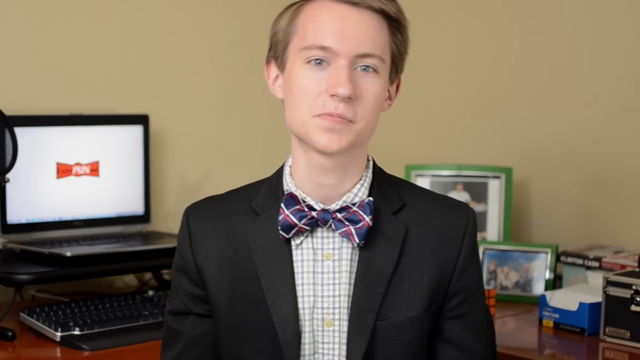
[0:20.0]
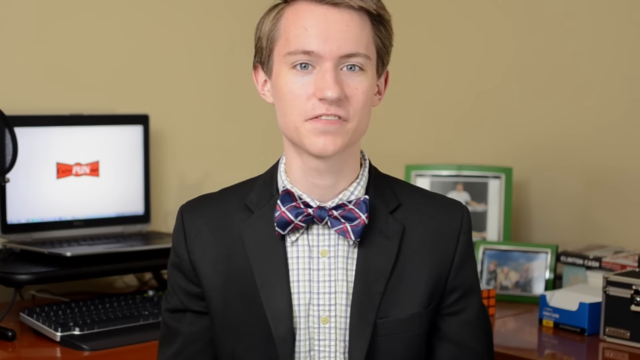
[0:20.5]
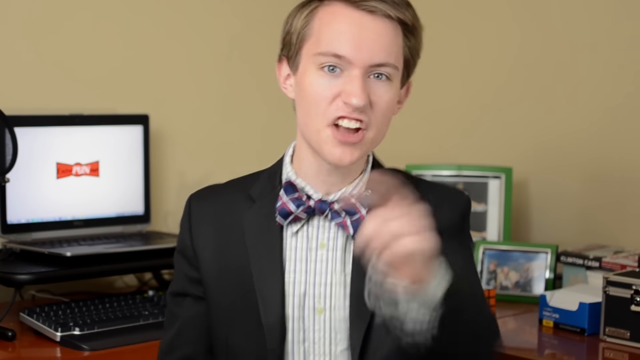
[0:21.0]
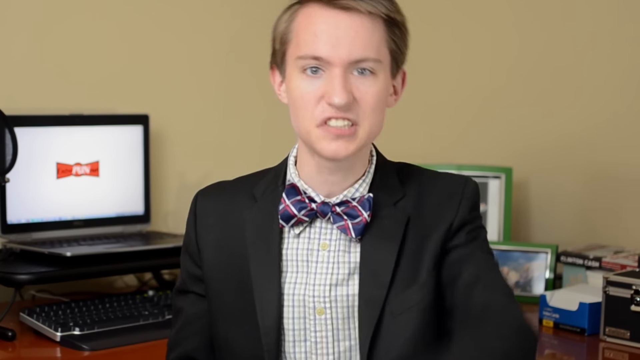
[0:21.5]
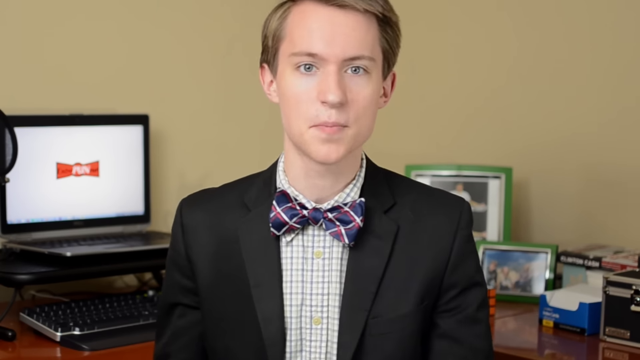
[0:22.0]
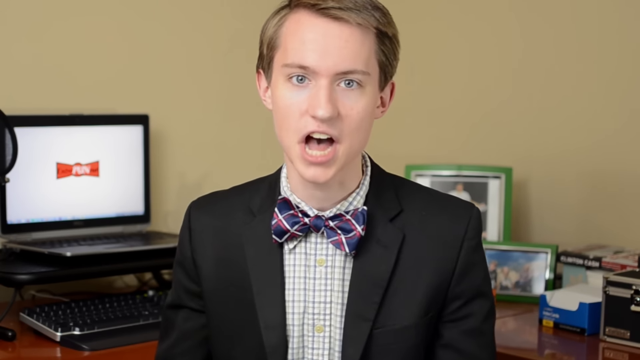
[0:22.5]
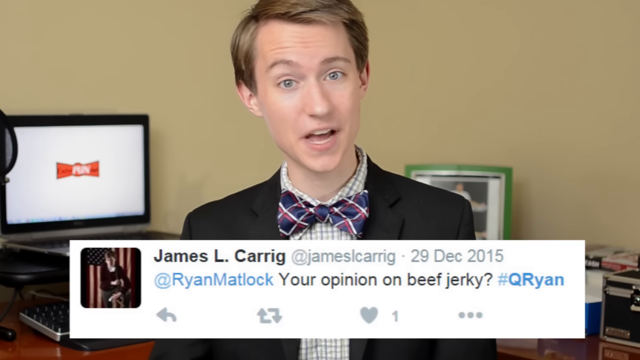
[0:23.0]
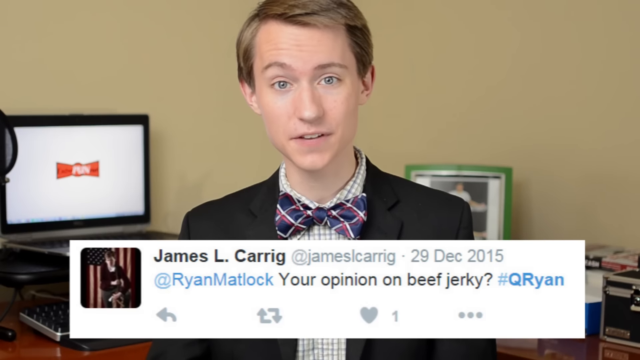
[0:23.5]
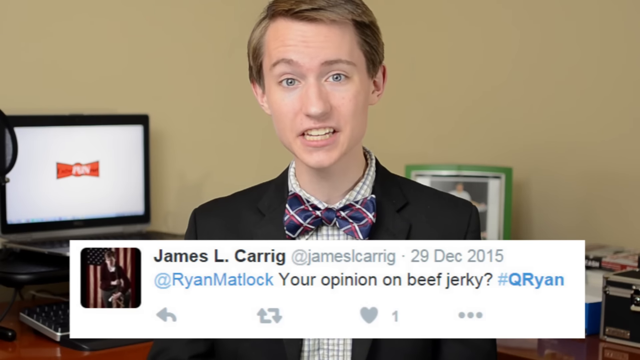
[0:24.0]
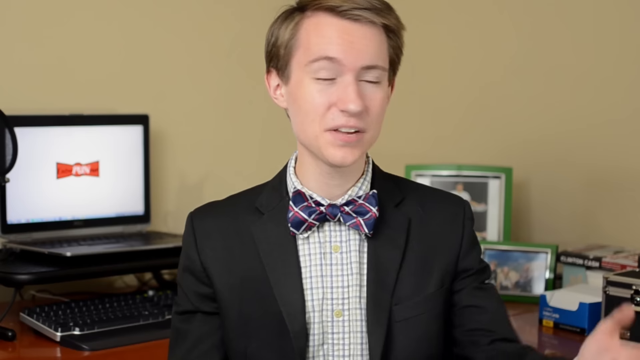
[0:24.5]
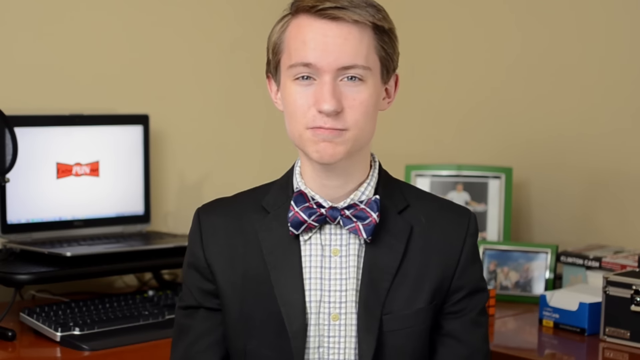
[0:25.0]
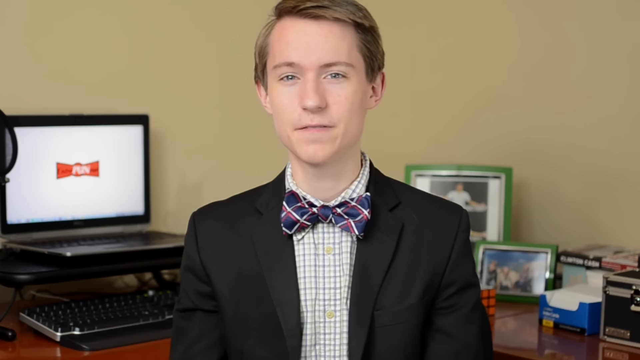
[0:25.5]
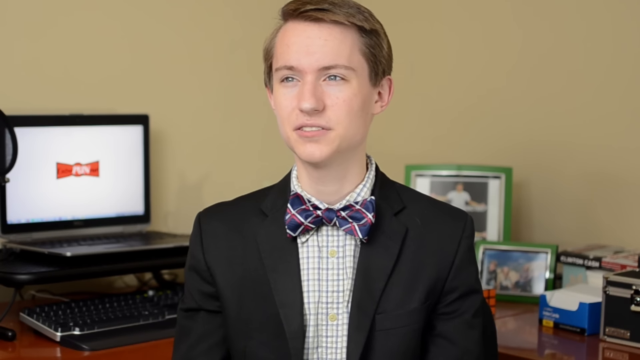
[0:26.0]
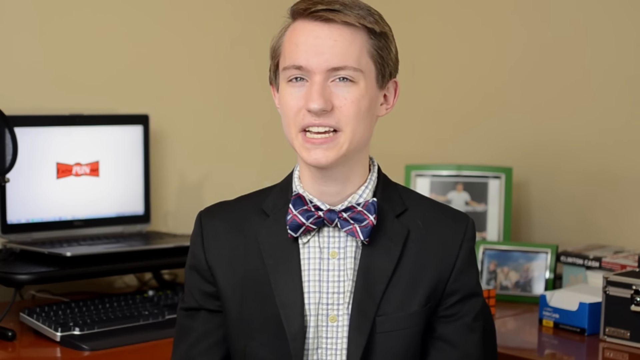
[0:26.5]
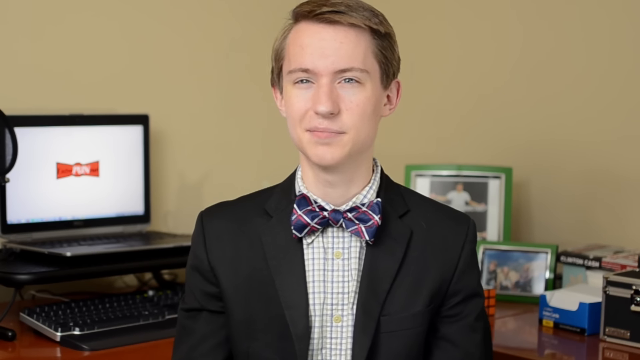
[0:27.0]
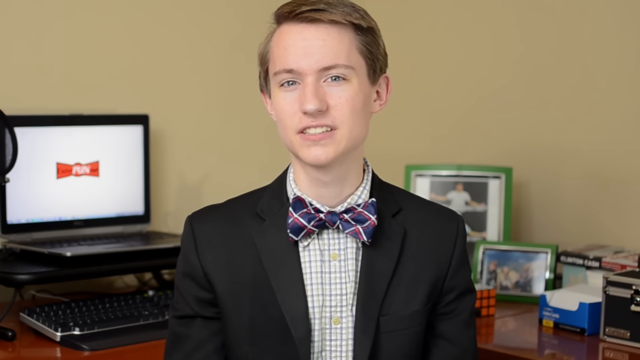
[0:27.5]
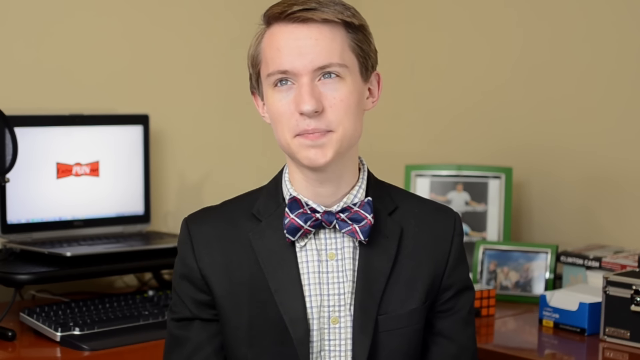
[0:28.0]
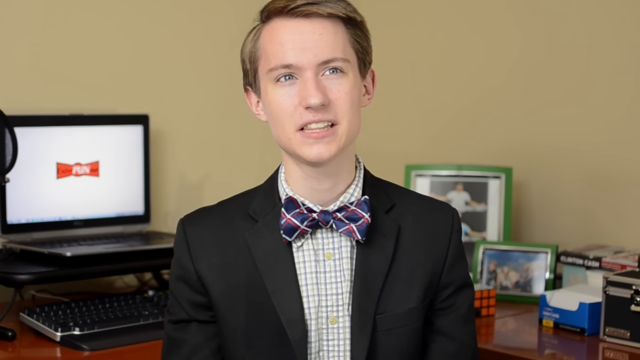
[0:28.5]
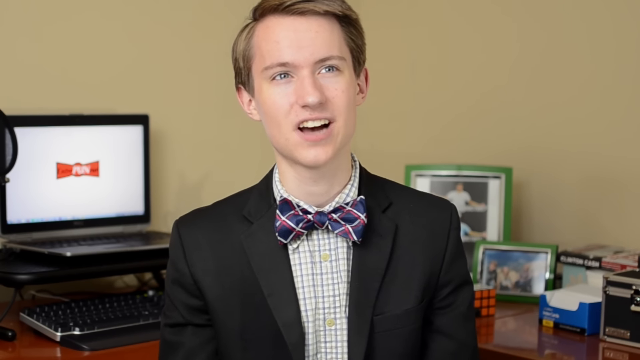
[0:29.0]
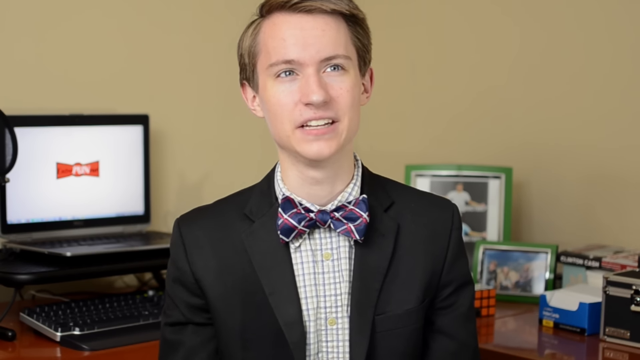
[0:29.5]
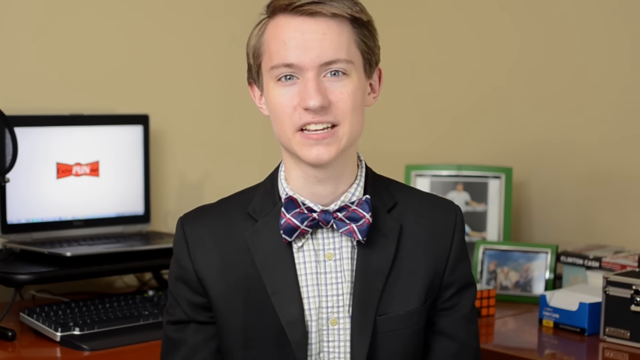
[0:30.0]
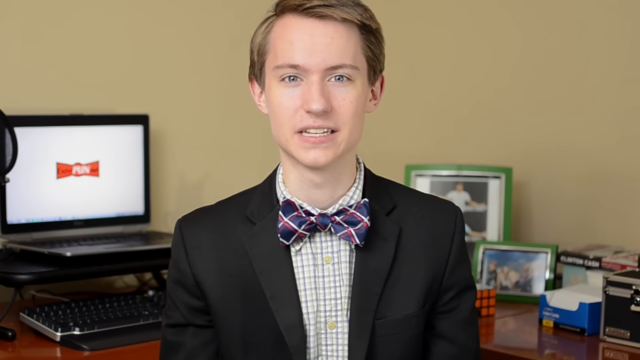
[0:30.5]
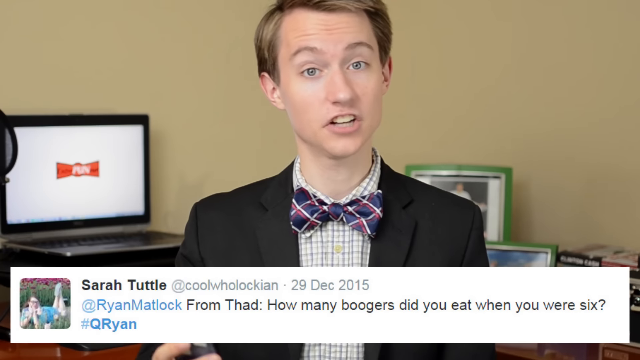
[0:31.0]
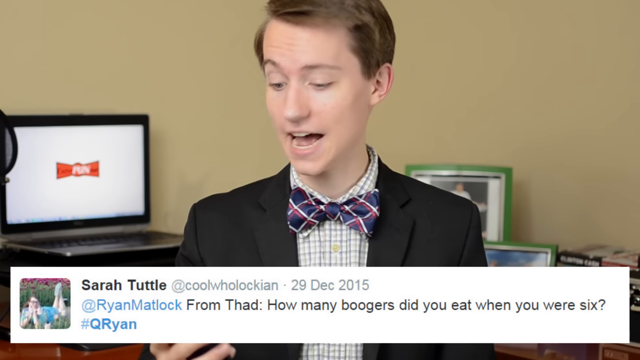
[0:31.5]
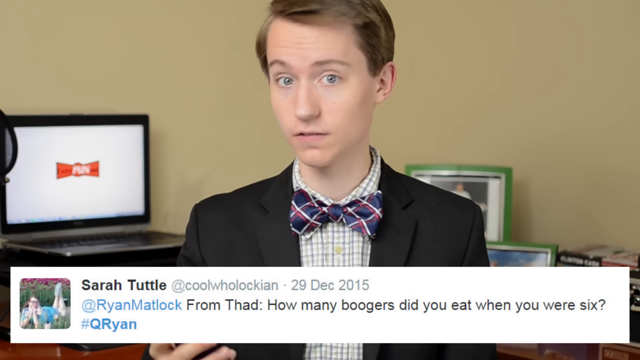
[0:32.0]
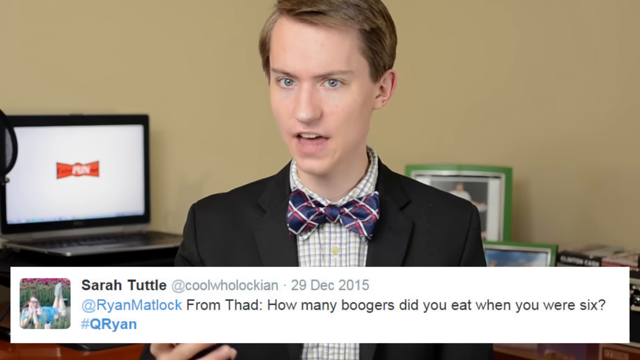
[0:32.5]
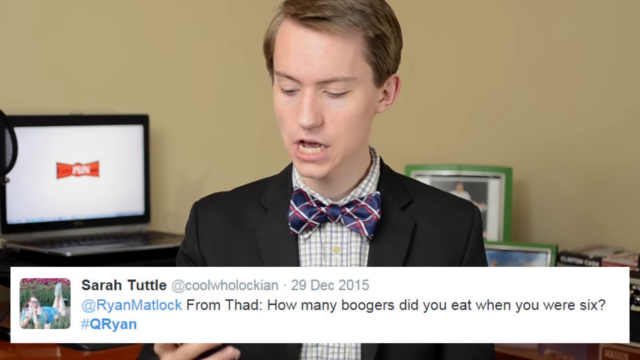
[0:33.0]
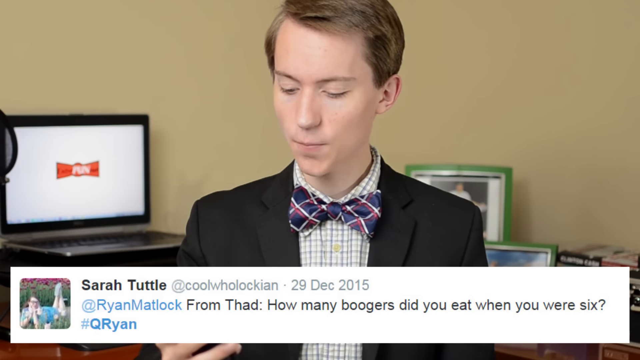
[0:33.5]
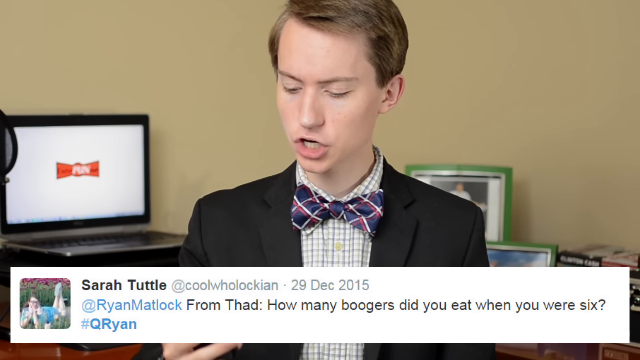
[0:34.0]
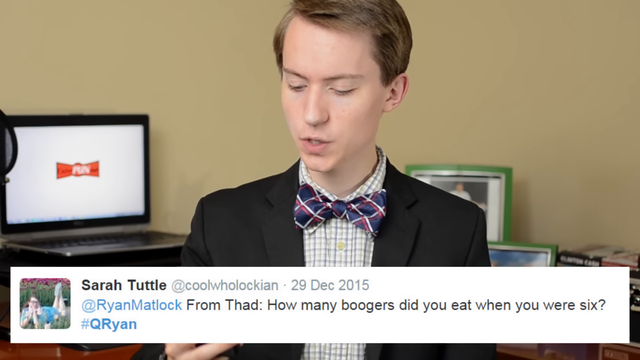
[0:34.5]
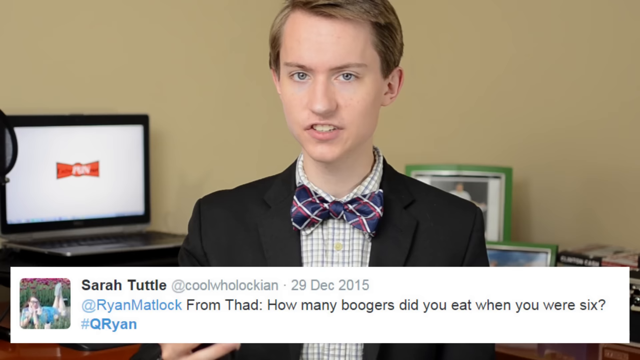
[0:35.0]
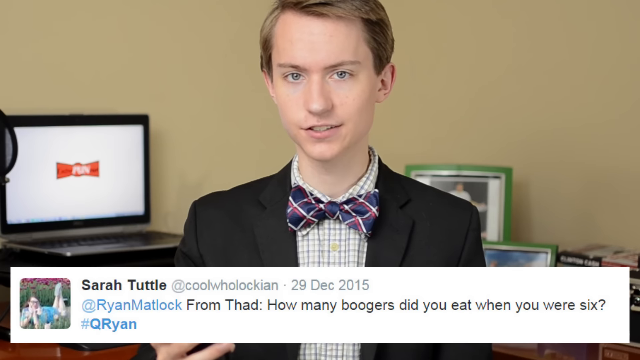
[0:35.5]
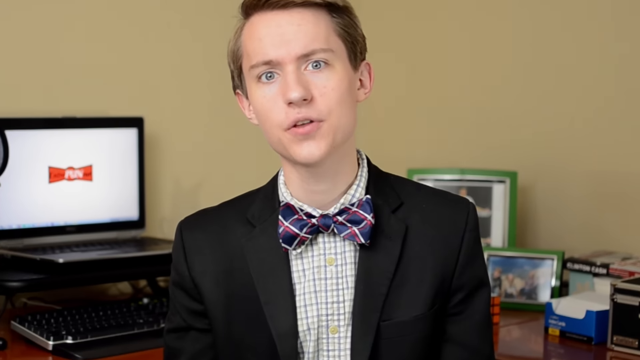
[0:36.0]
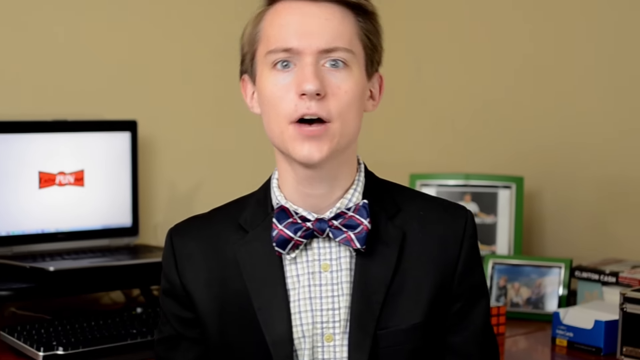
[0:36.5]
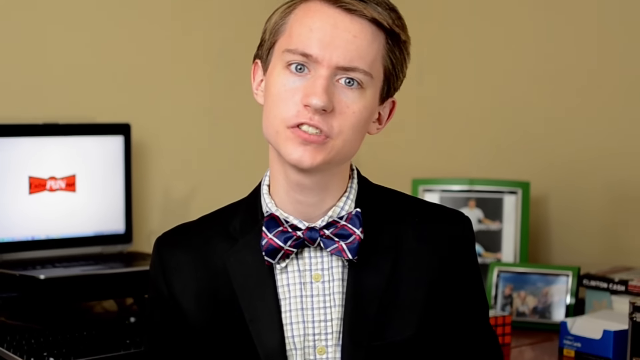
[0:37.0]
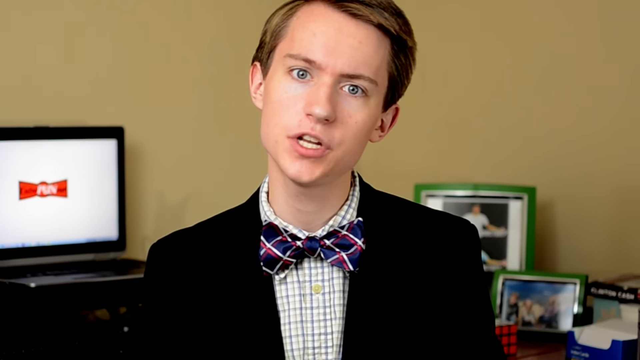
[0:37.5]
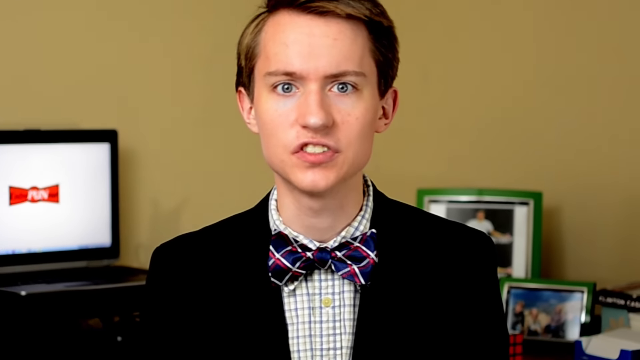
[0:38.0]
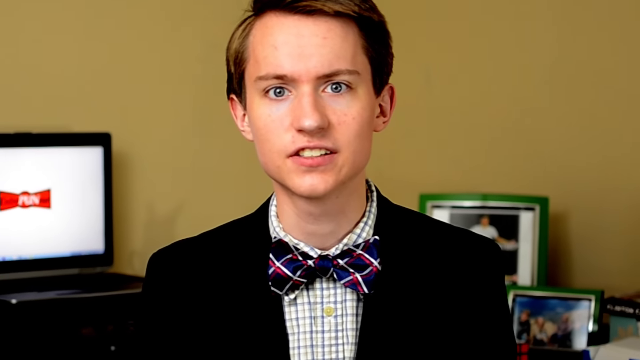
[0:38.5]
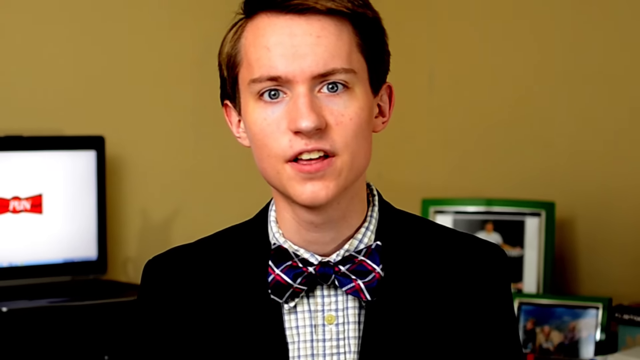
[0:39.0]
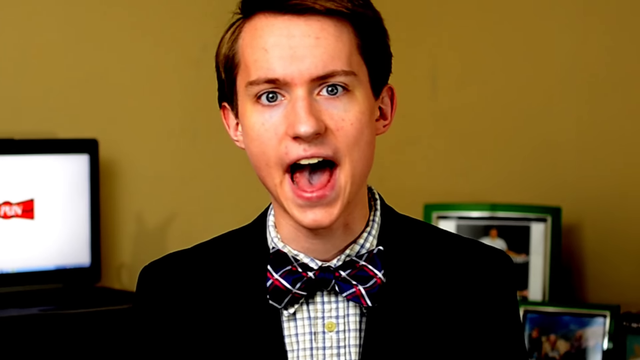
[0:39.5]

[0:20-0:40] The young man is in the same bedroom, in the middle of the frame, looking directly at the camera. He has a white skin tone, is probably in his 20s, and has short light brown hair. He wears a black suit jacket, a dark blue bow tie with white and red stripes, and a buttoned-up white dress shirt with a sort of grayish checkered look. He points toward the camera with his left hand, his expression becoming a little angrier as he kind of shouts. A white rectangle appears at the bottom middle with another tweet, from the handle James L. CARRIG, posted on 29 December 2015 and addressed to @Ryan Matlock: "write your opinion on beef jerky". The tweet is removed and he continues talking directly to the camera with his arms down at his sides. Another tweet appears at the bottom, from Sarah Tuttle, addressed to the same person: "how many boogers did you eat when you were six?" The tweet disappears, and the camera zooms in again, the image becoming very contrasty and darkened around the edges.